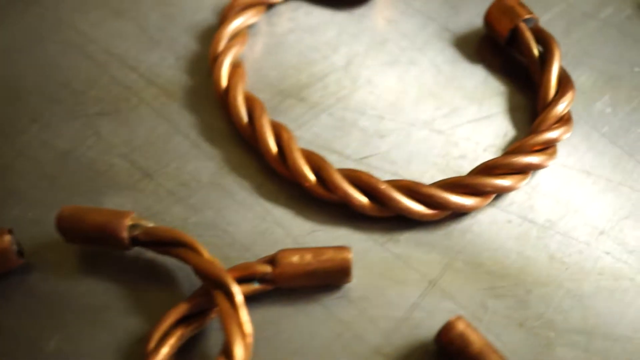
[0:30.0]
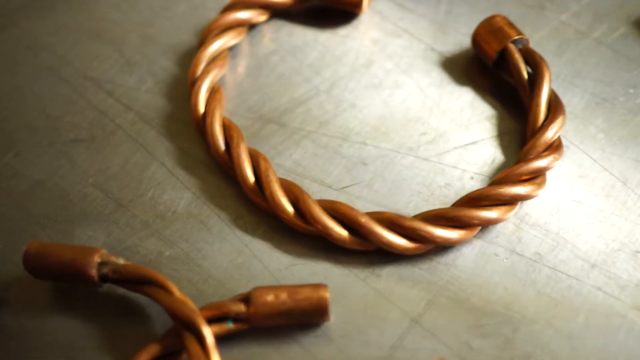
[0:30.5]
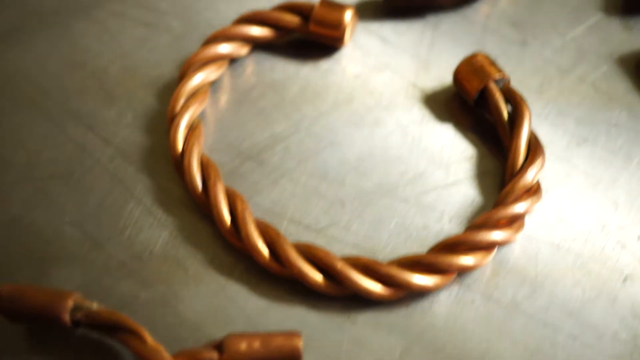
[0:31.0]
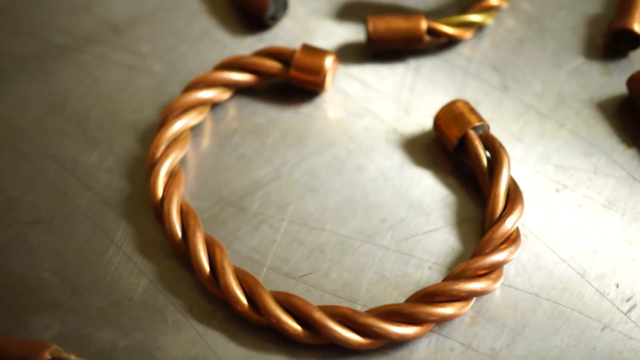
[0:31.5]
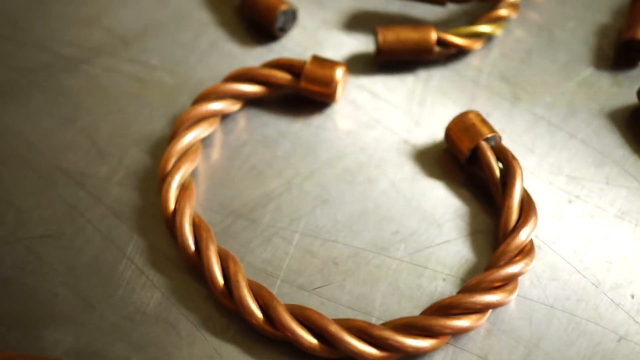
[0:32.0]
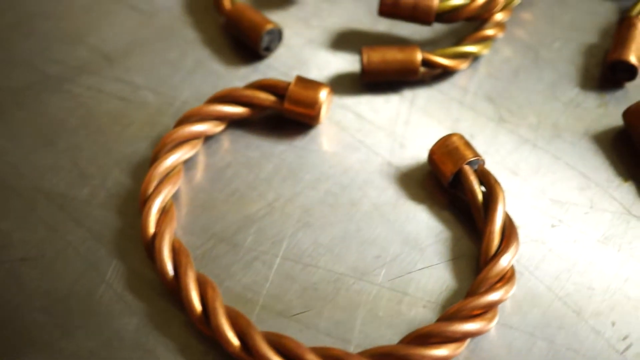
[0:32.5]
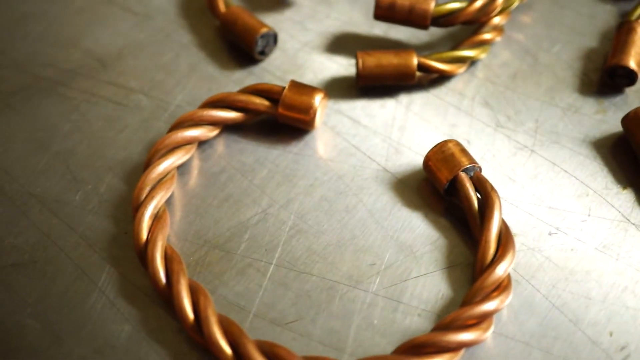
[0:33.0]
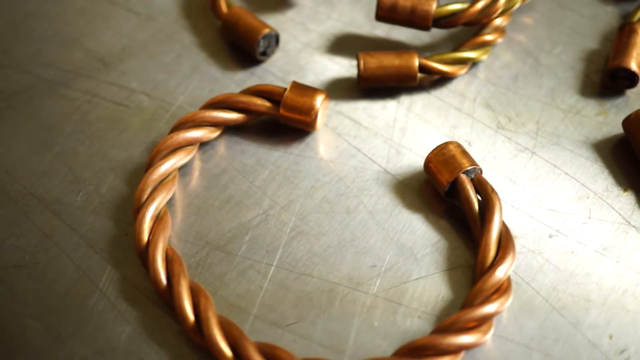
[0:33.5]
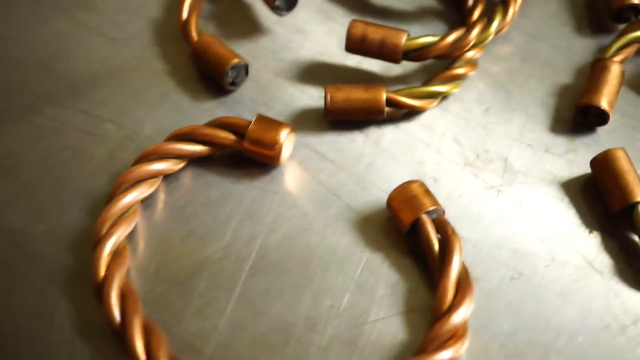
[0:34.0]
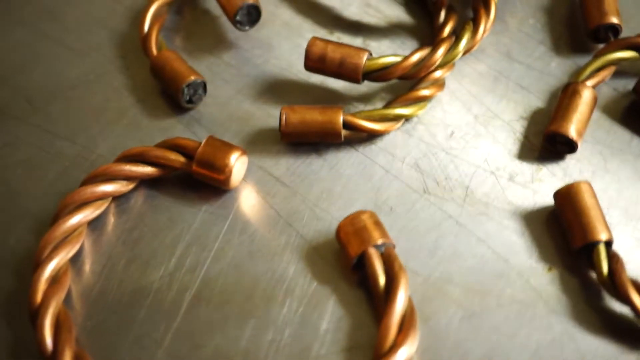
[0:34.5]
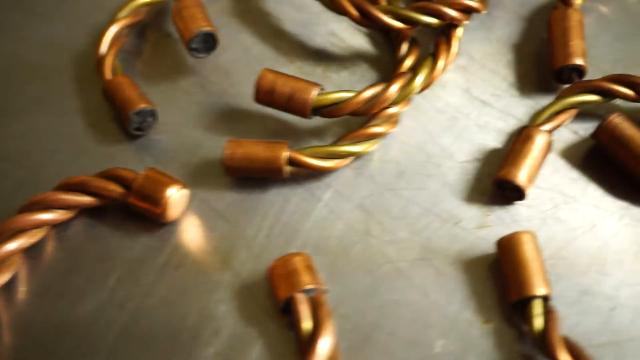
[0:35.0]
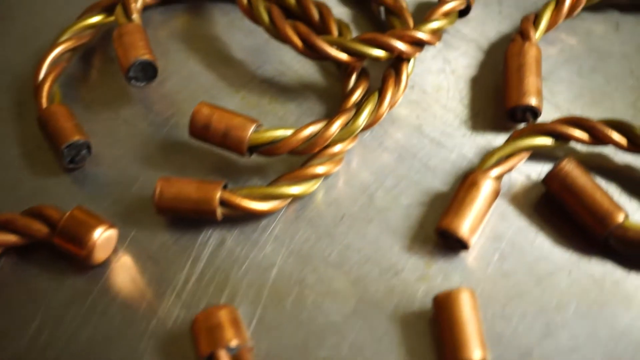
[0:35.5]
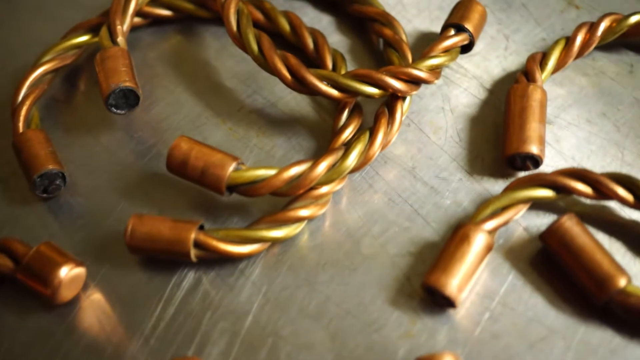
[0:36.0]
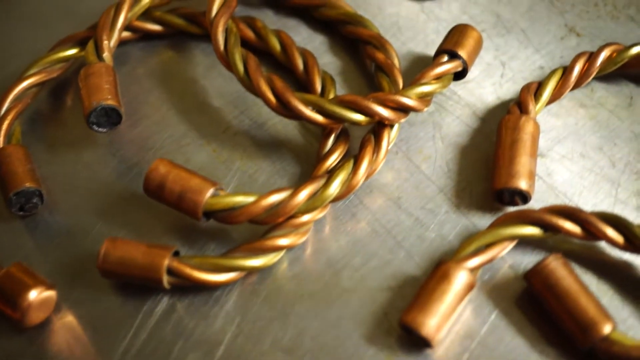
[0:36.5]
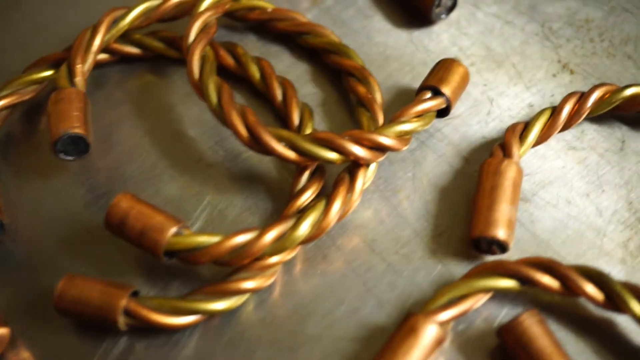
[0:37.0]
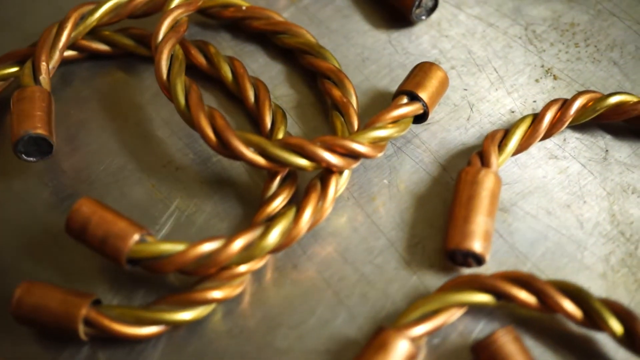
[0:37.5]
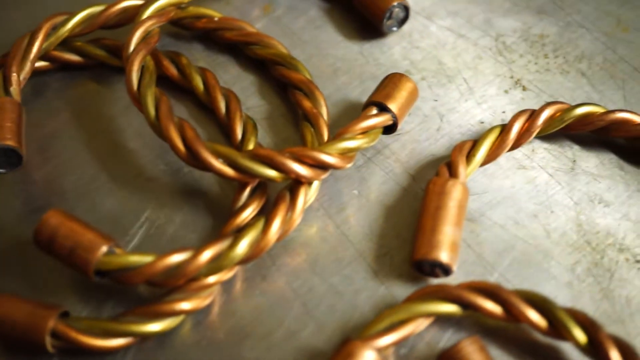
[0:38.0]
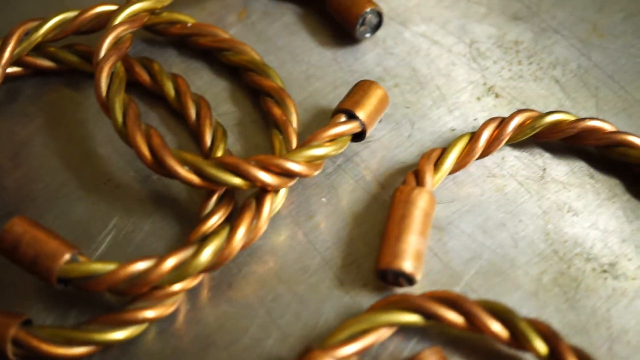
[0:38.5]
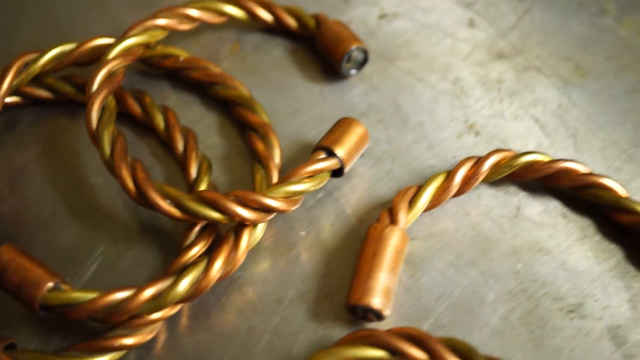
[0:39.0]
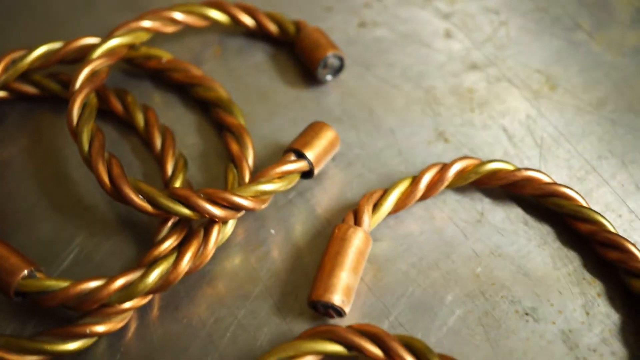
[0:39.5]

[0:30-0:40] On a table or workbench are multiple braided wire bracelets. The bracelets form a sort of round C shape, and the braids end on both ends with copper caps. Many of them are piled up on the table. Some are made entirely of copper wire, while others combine a brass-colored wire with copper wire for variation. The camera slowly continues panning over the pile. About seven or more bracelets are visible, many of them laid out flat or piled on top of each other. They all have the same copper cap.